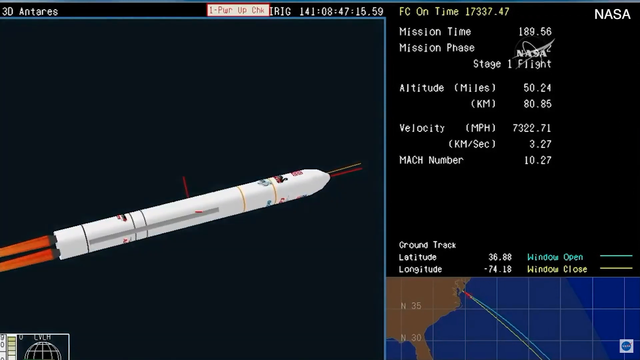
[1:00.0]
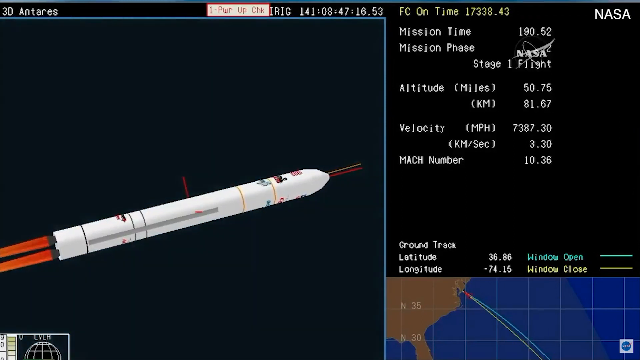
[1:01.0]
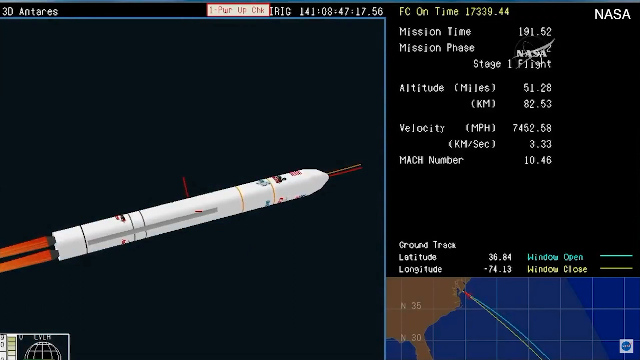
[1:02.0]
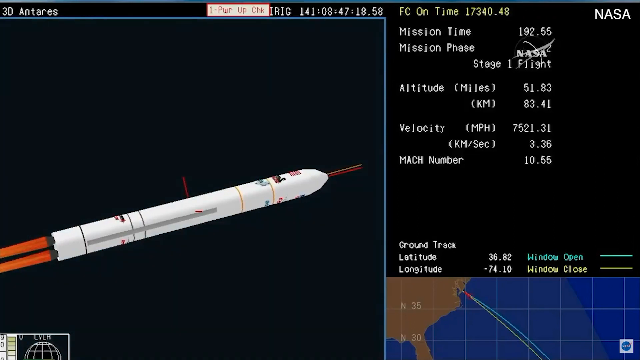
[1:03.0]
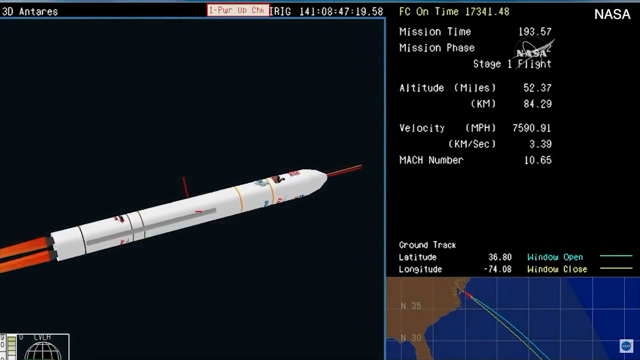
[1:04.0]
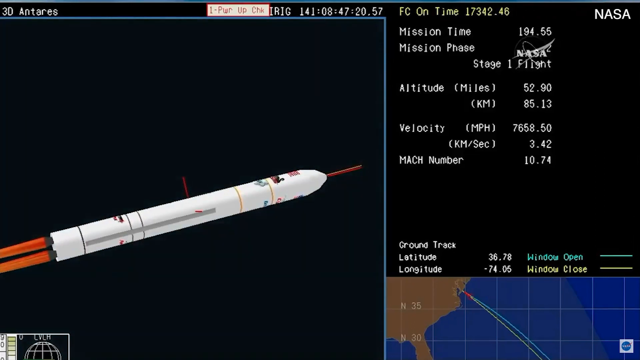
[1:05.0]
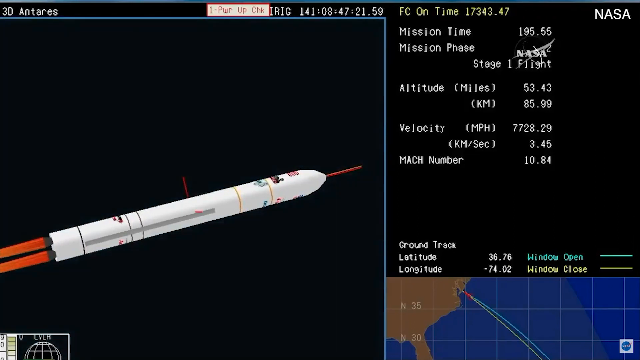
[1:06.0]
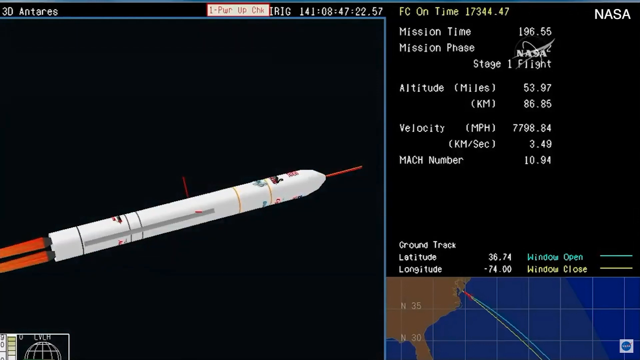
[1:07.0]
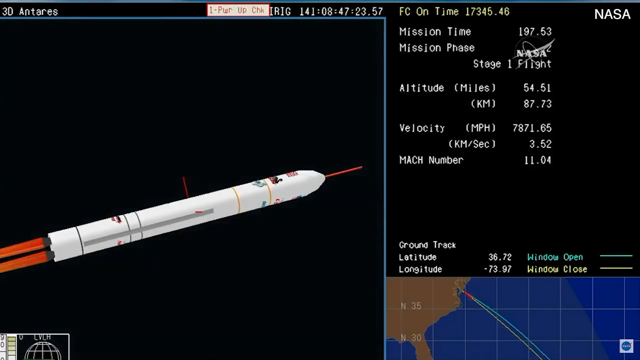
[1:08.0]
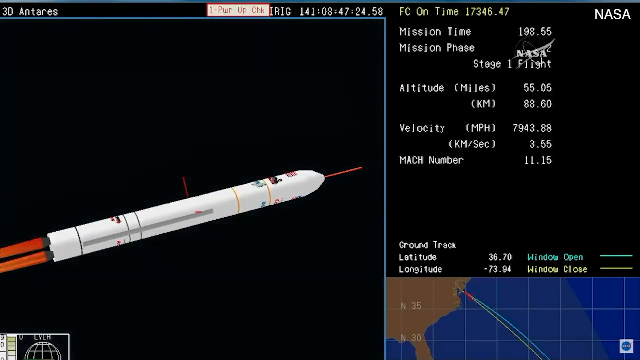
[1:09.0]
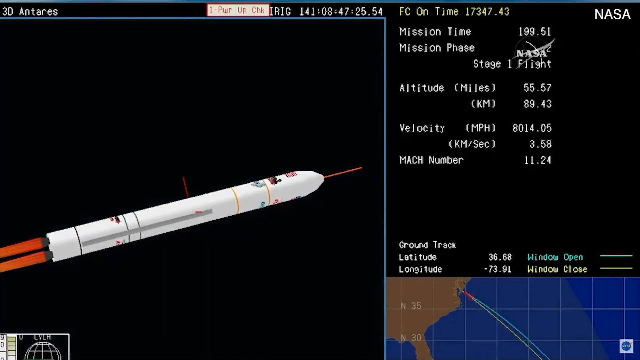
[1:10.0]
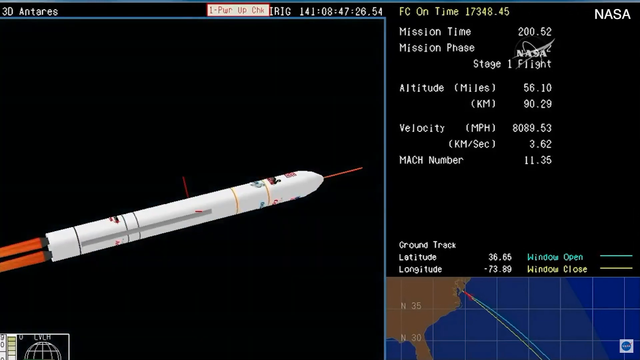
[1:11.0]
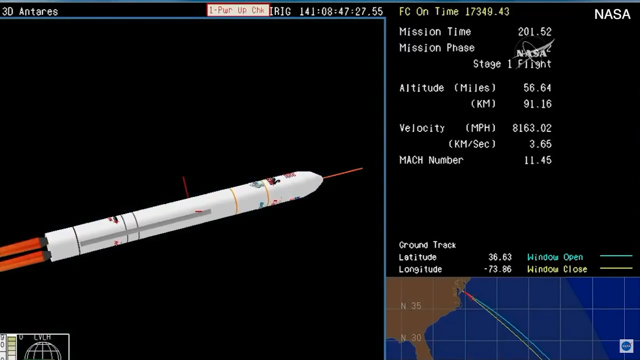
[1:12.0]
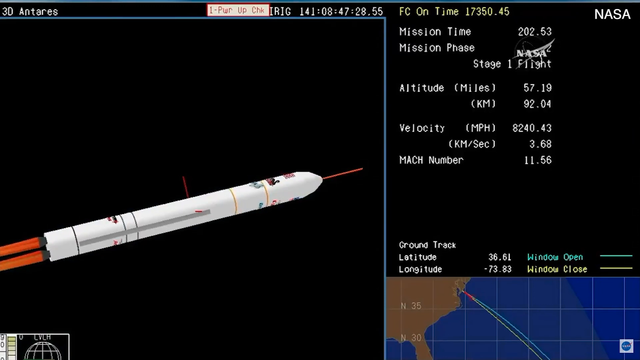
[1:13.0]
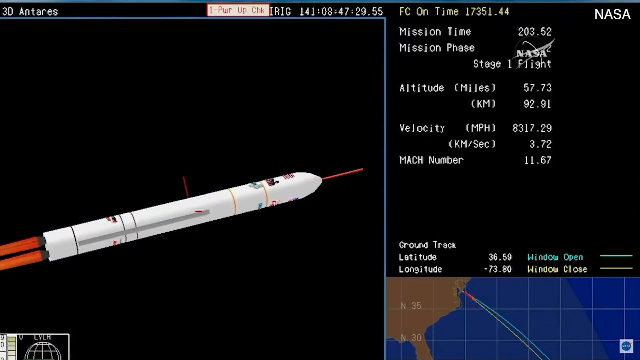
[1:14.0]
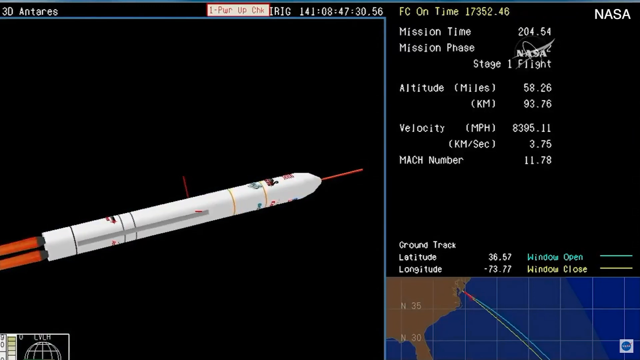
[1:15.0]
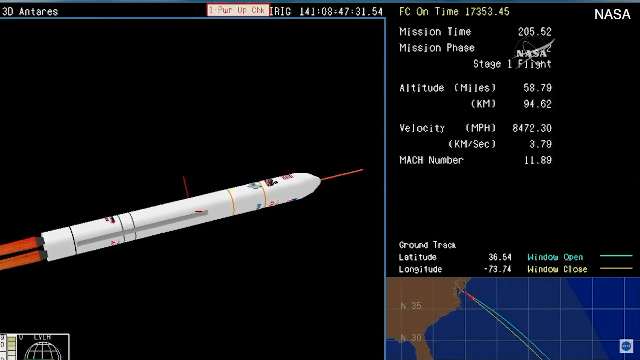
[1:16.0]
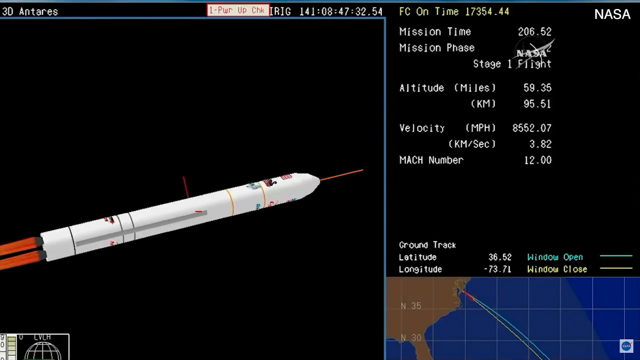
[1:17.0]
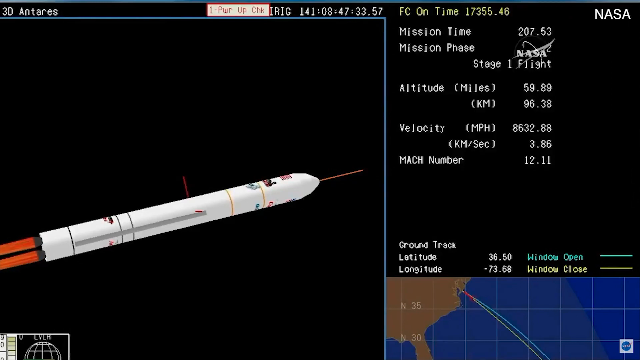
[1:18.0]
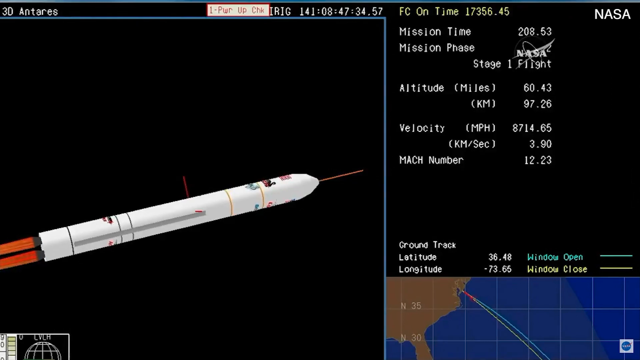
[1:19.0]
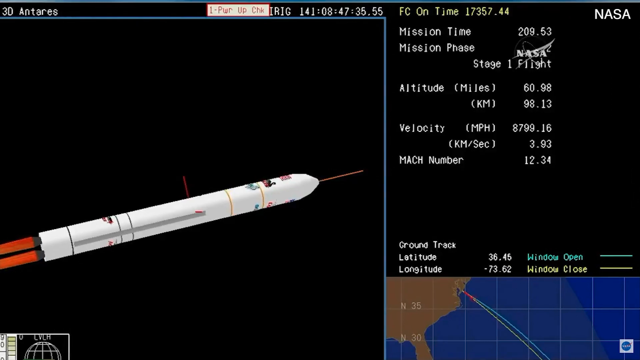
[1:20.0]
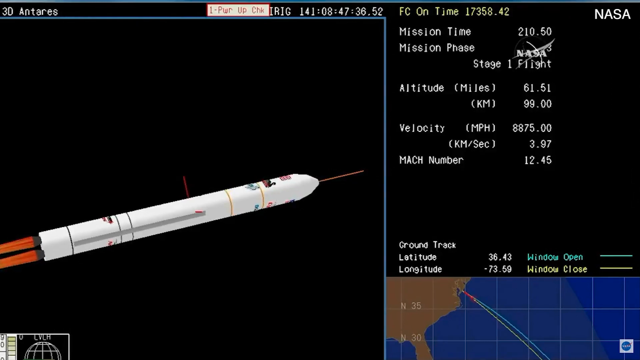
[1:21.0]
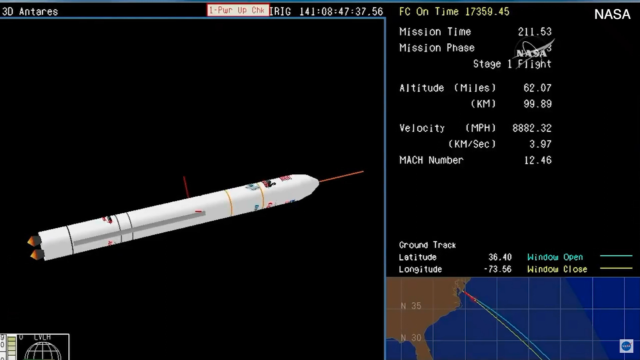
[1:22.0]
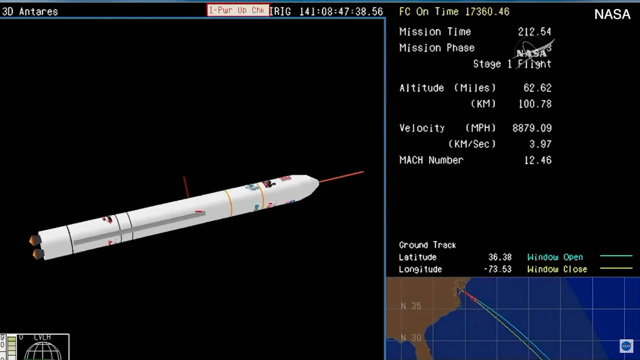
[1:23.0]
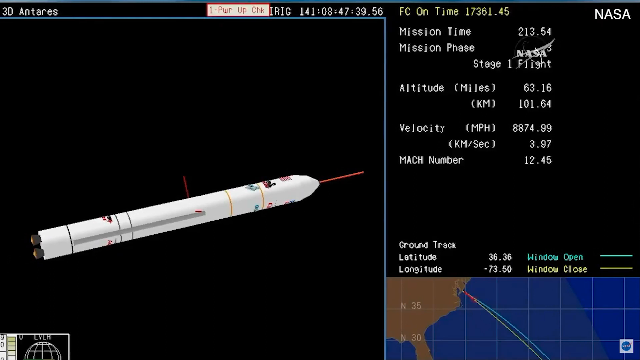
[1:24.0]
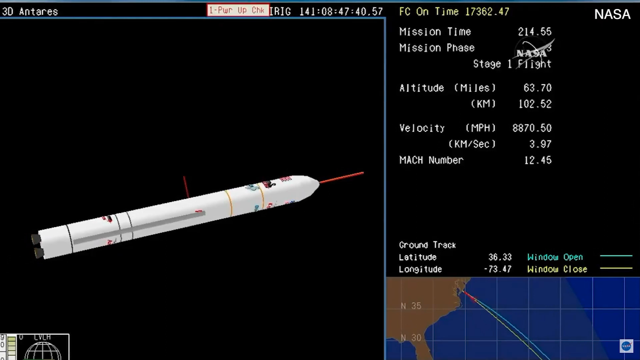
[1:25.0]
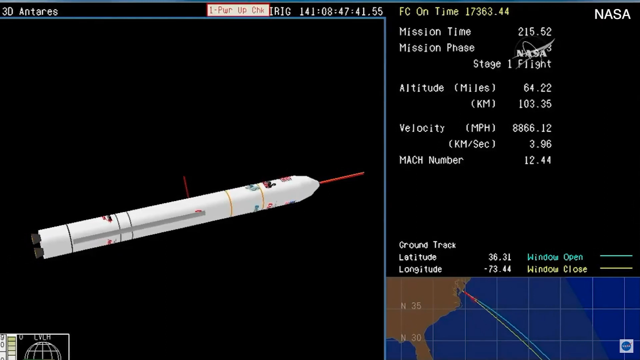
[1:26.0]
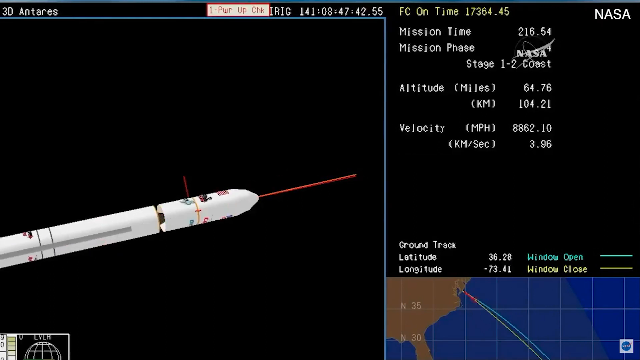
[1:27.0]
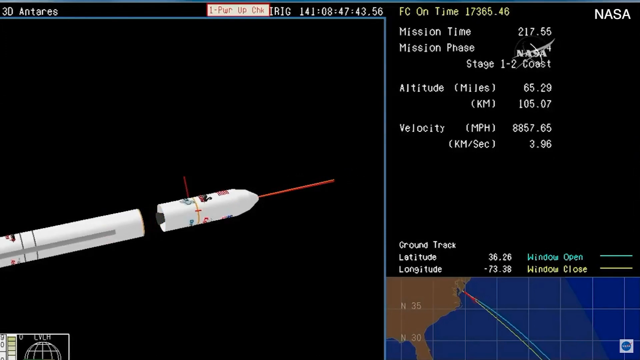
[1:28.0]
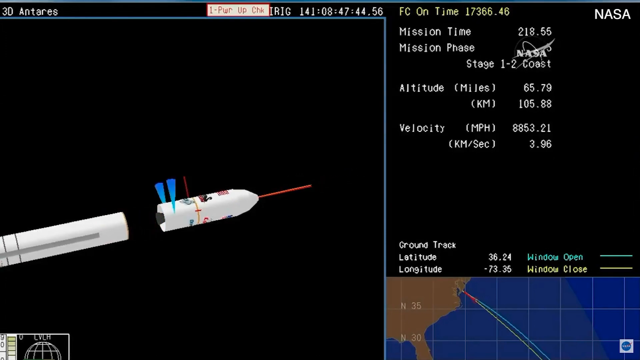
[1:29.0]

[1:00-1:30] Readouts for "mission time", "altitude" and "velocity" are shown on the screen. The rocket travels through a pitch-black background, standing out in contrast against the dark.